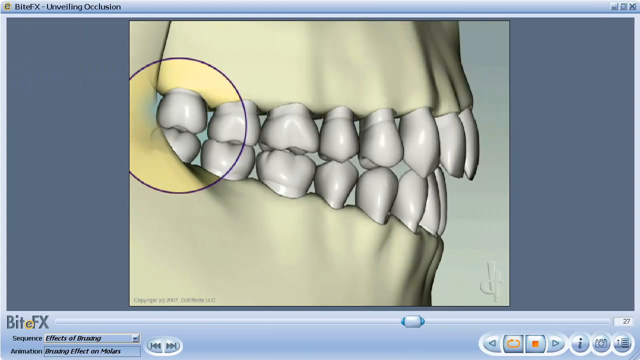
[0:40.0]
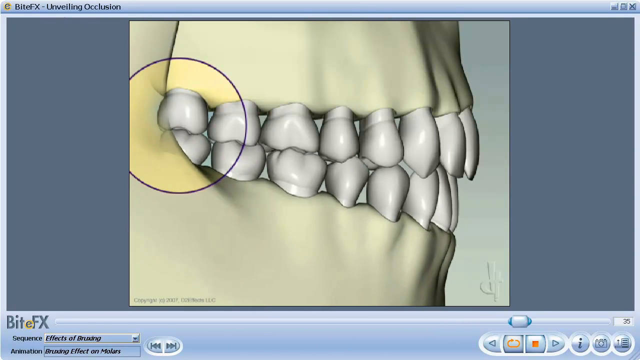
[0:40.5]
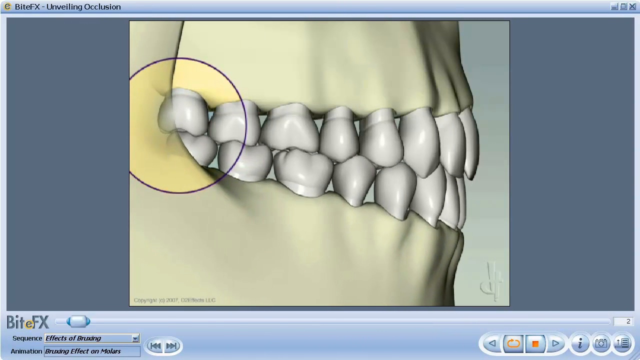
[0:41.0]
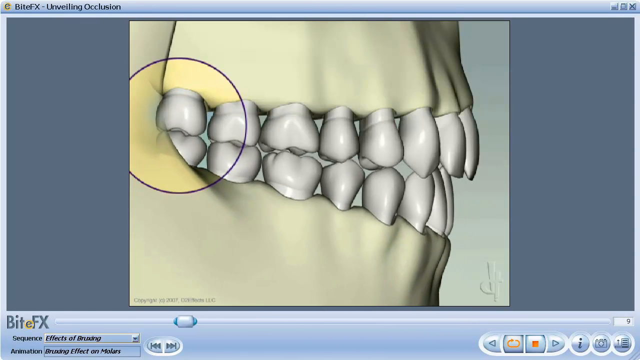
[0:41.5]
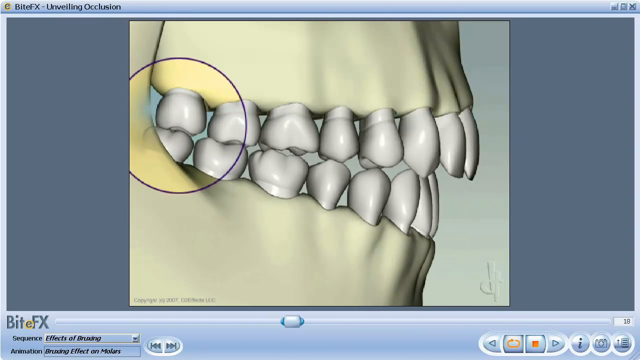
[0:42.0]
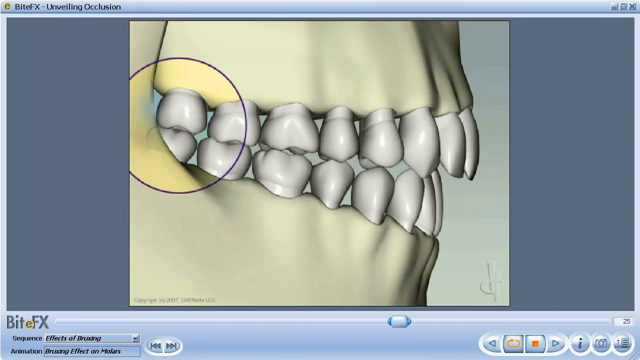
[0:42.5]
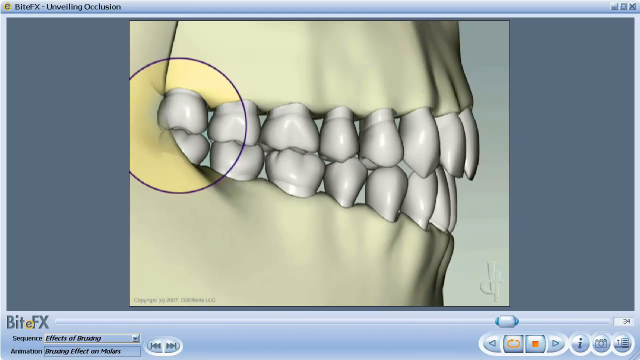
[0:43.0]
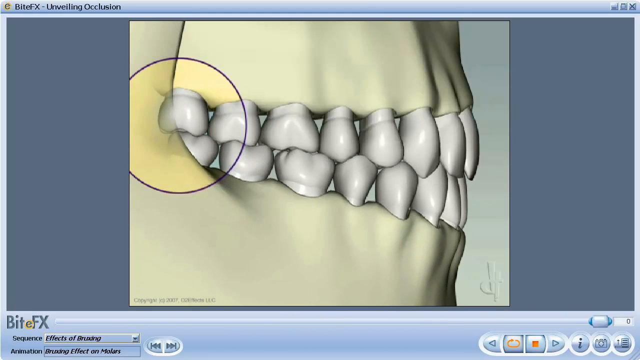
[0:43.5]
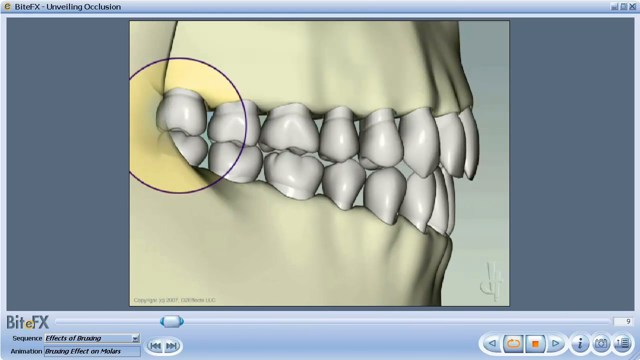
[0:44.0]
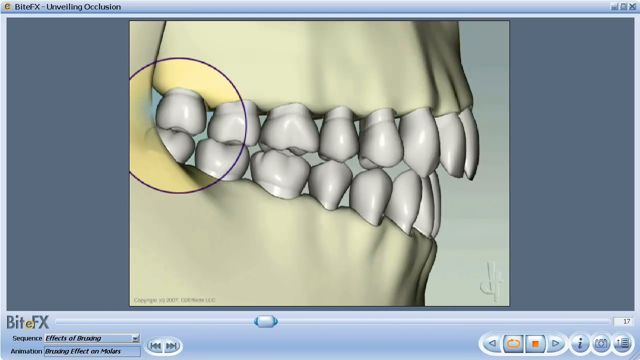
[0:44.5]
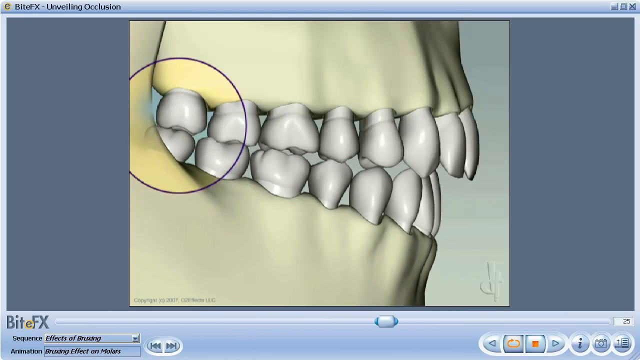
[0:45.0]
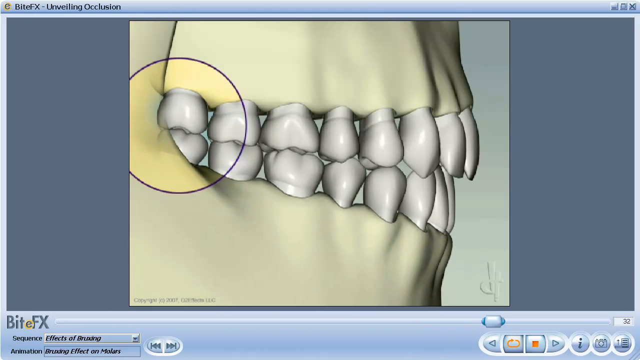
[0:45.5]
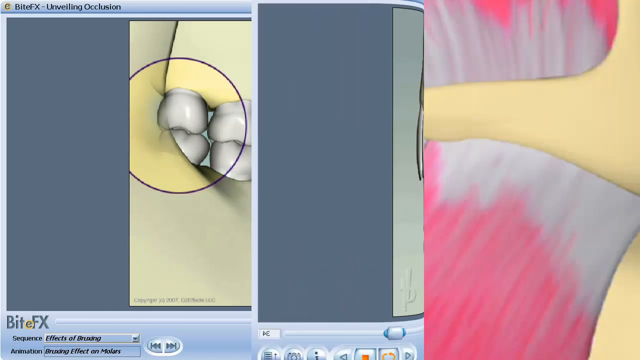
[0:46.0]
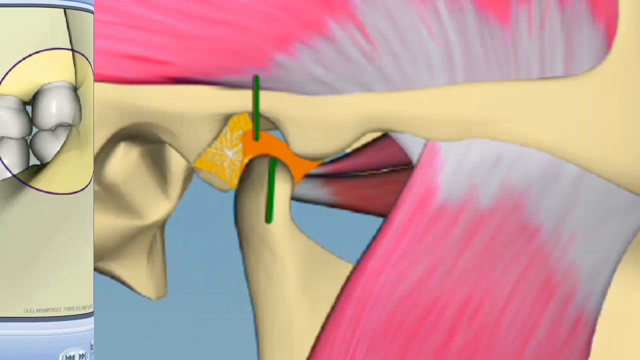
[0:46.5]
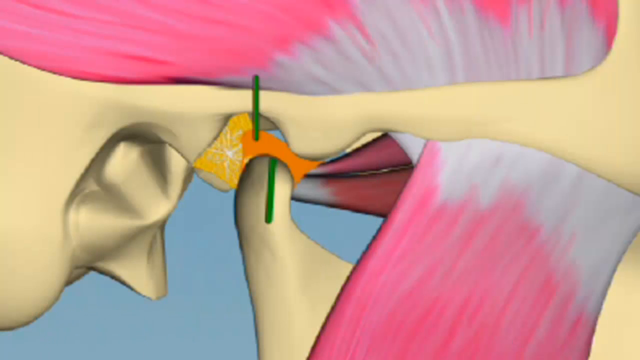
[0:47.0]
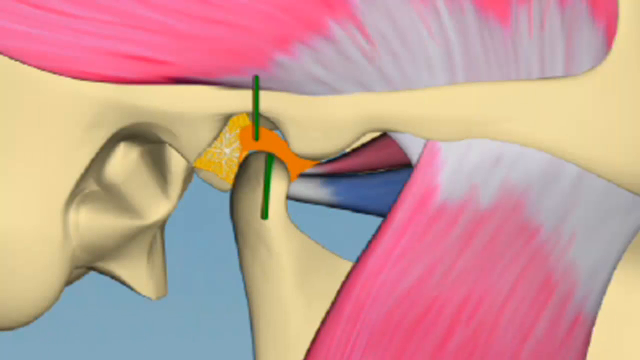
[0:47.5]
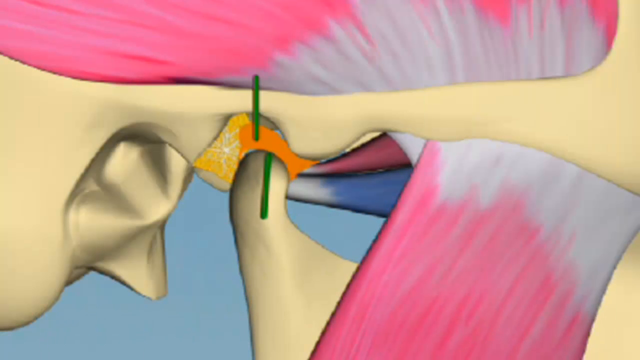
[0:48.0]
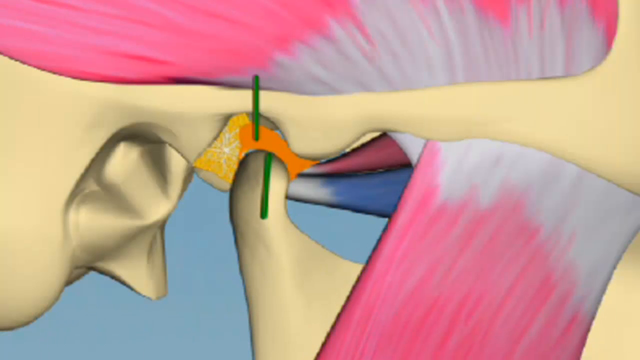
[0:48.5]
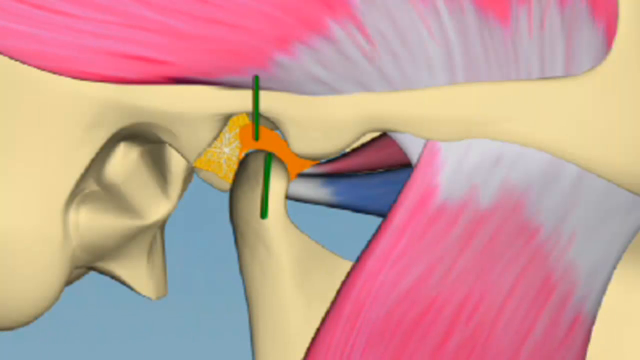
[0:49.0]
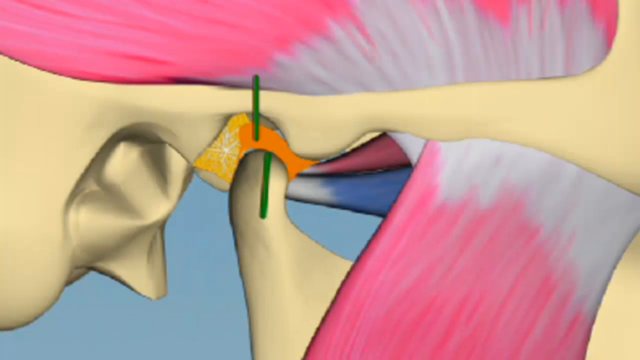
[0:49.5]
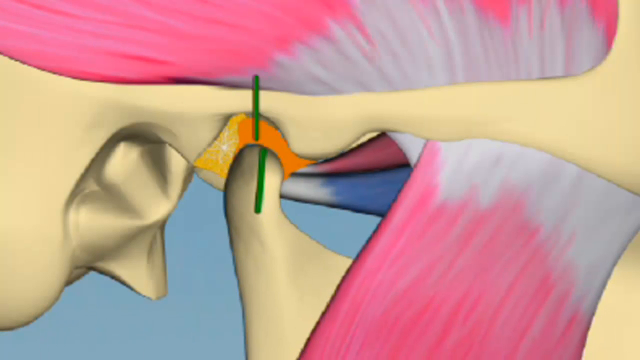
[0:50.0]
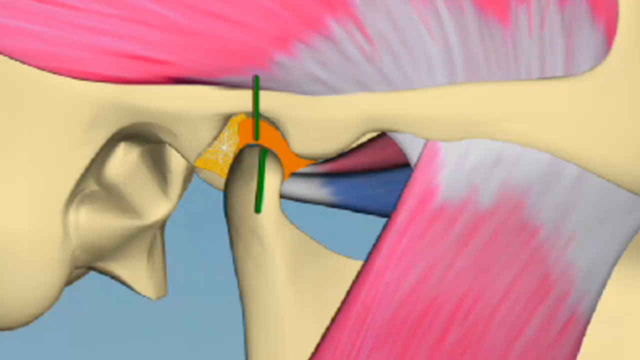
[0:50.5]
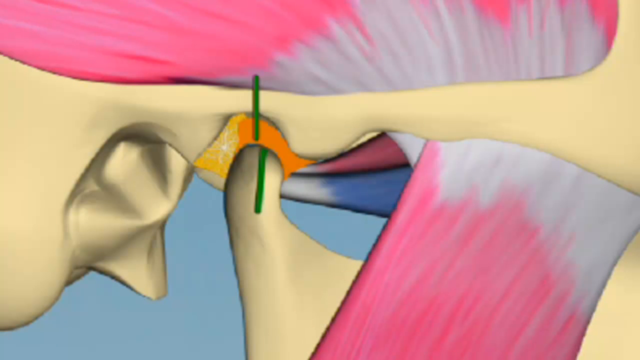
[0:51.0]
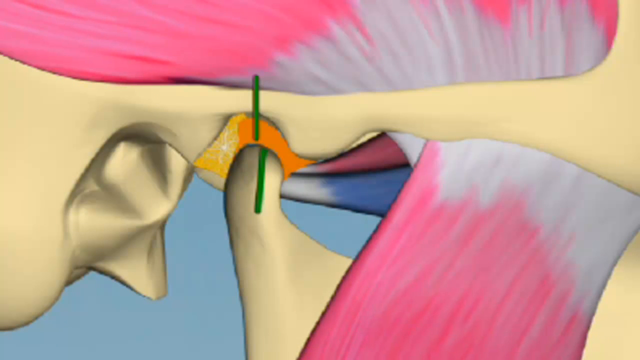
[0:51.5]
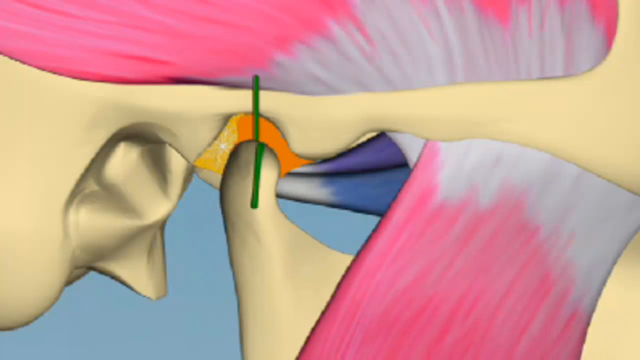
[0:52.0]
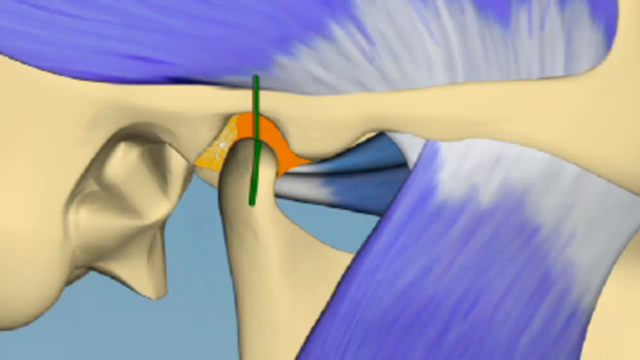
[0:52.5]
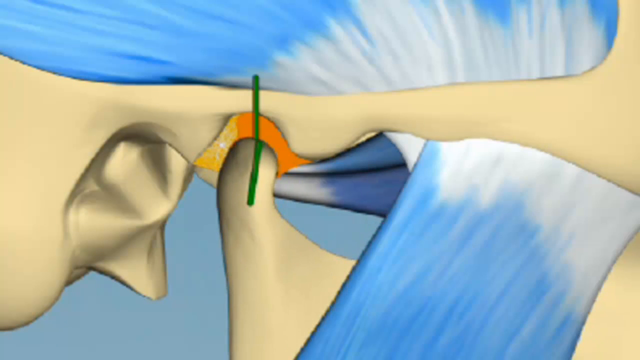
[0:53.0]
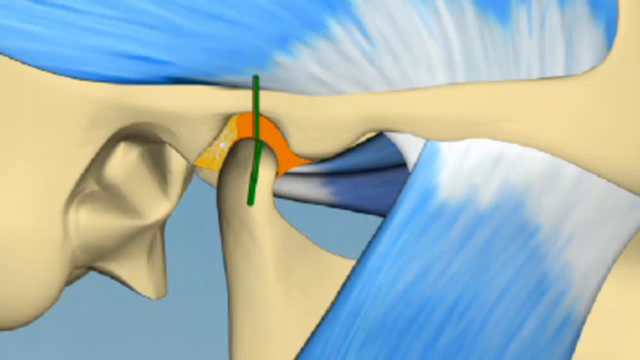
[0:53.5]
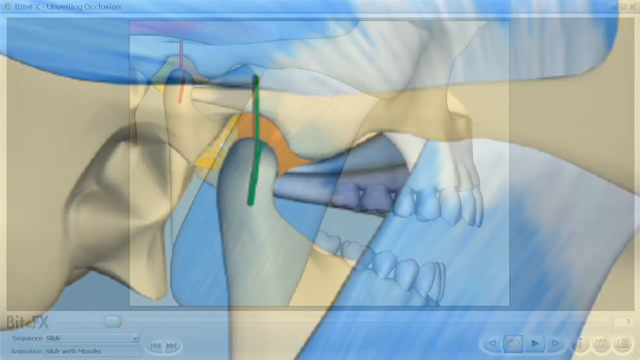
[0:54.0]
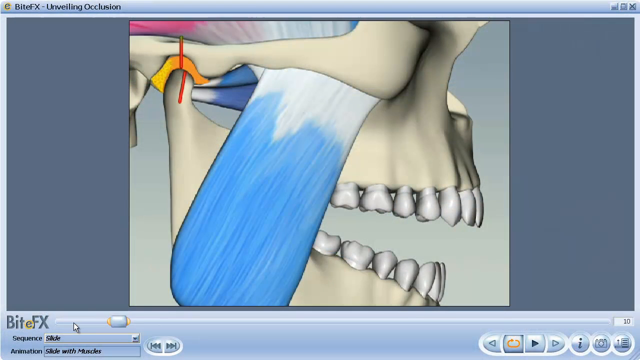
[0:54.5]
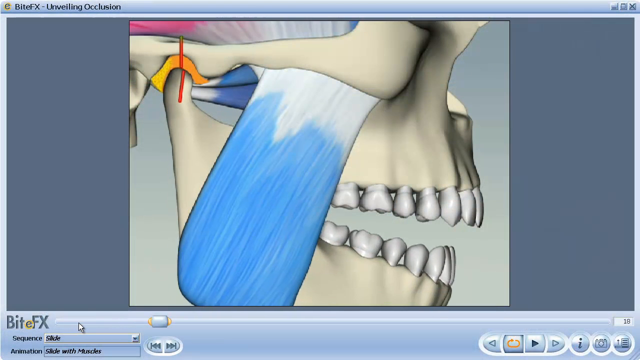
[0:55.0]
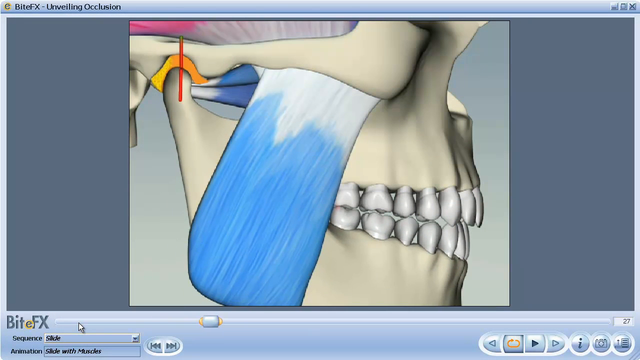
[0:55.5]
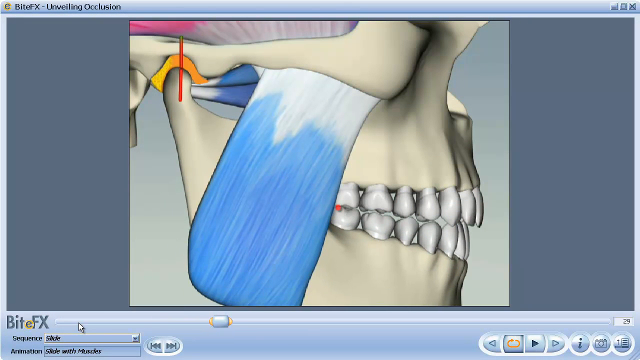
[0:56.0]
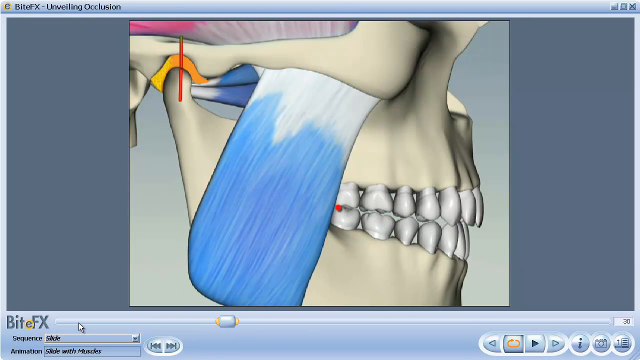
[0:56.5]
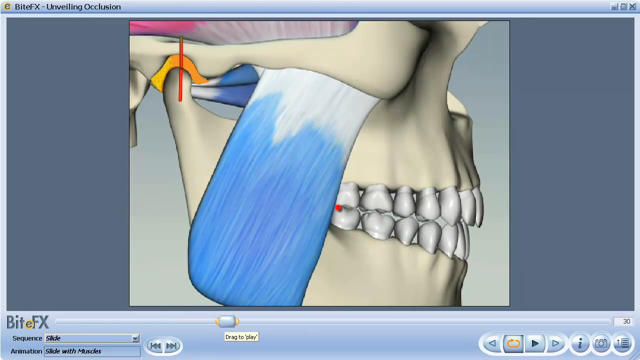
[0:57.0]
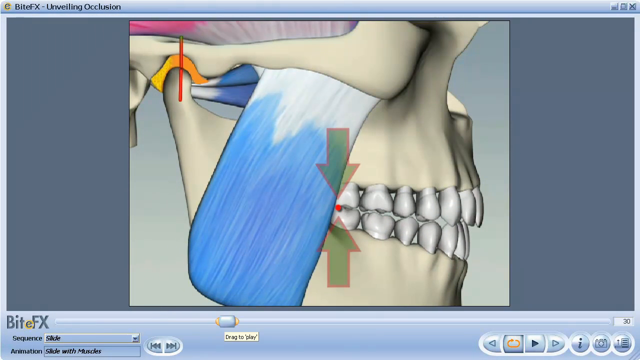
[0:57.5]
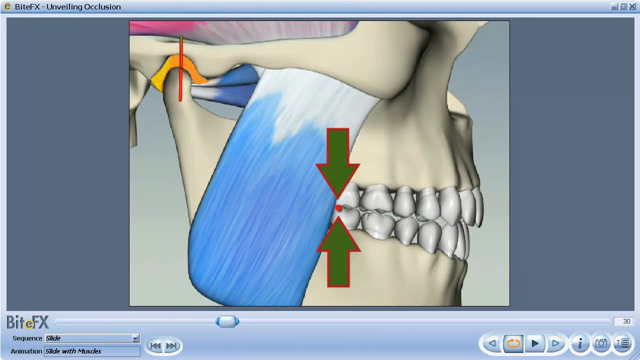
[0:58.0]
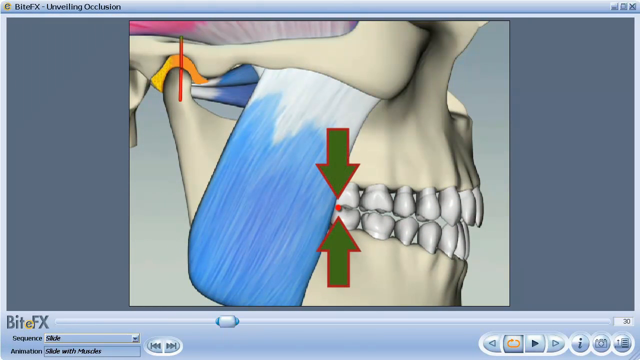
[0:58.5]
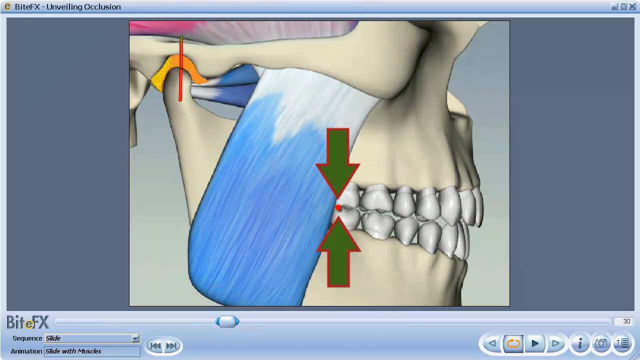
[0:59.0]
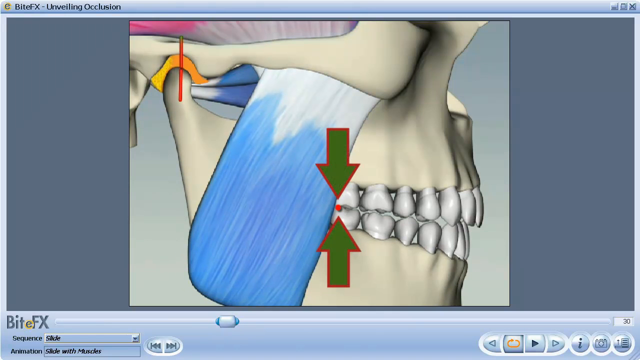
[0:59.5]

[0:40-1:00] The side of a skull with teeth appears, along with a little circle outlined in purple as well as yellow, and the teeth kind of grind in an animation. This is in the ByteFX software, with different settings at the bottom of the screen. It transitions to another screen that is really hard to make out, possibly the inside of a mouth, with red and white and green lines connecting to an orange thing. The red turns blue. Another animation shows a skull with teeth and a blue and white thing; the teeth kind of go up and touch another tooth, and green and red arrows point to a little red circle.